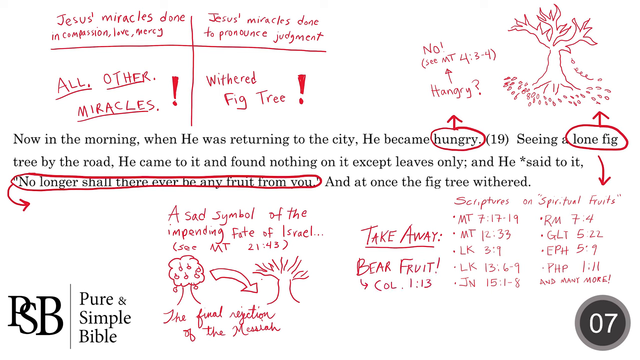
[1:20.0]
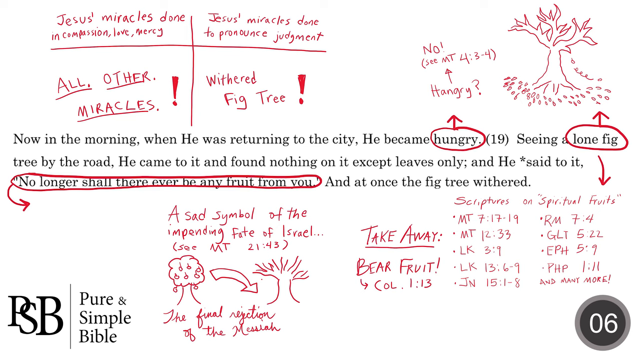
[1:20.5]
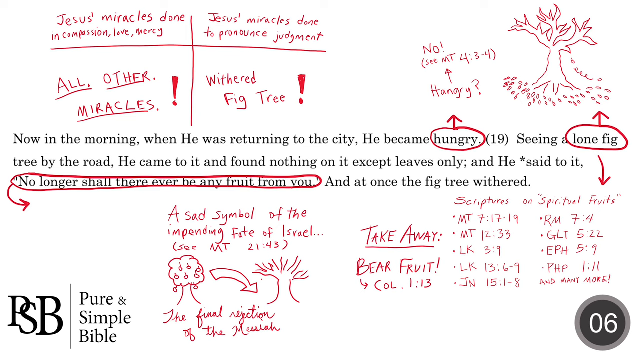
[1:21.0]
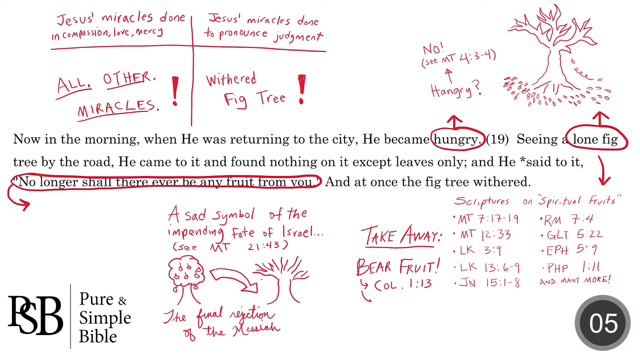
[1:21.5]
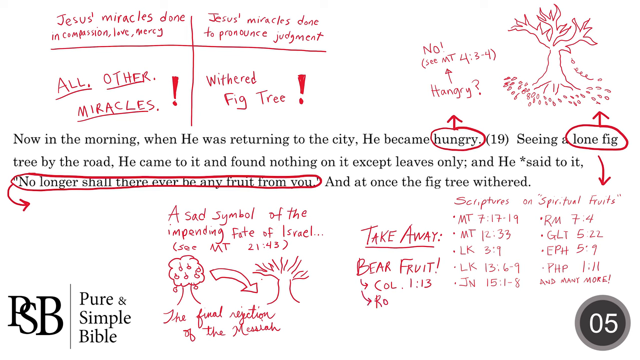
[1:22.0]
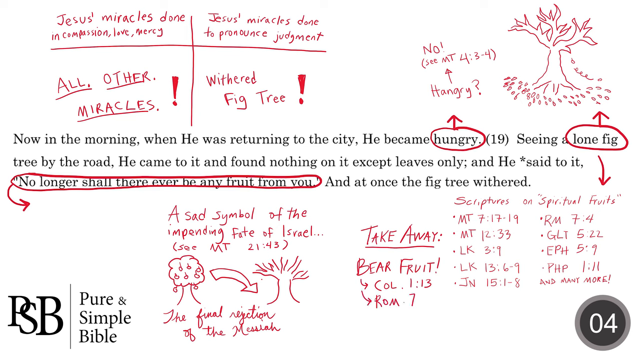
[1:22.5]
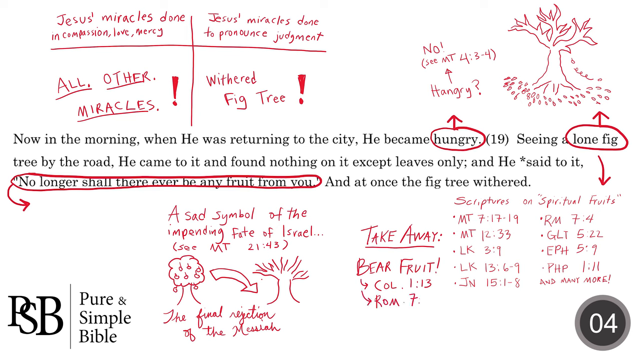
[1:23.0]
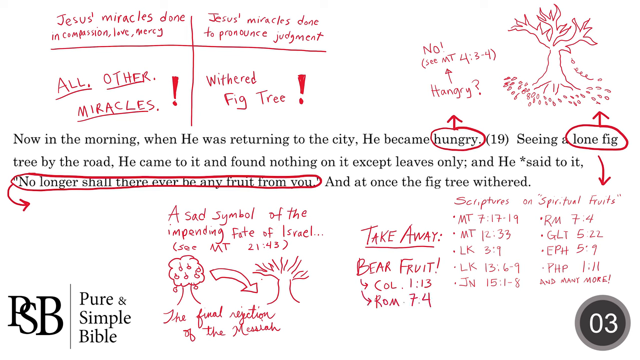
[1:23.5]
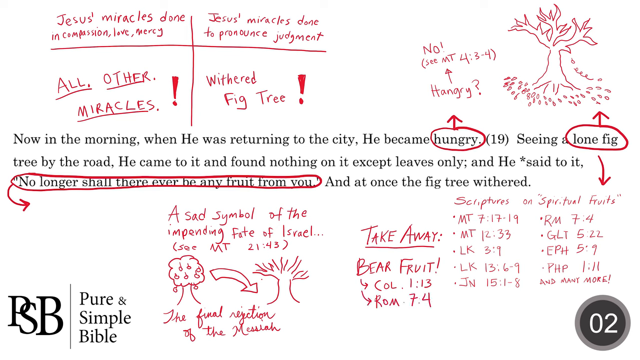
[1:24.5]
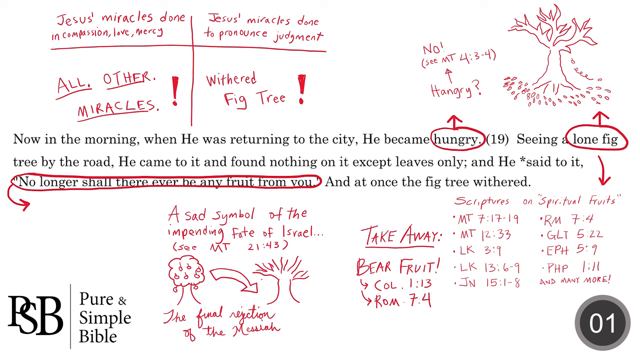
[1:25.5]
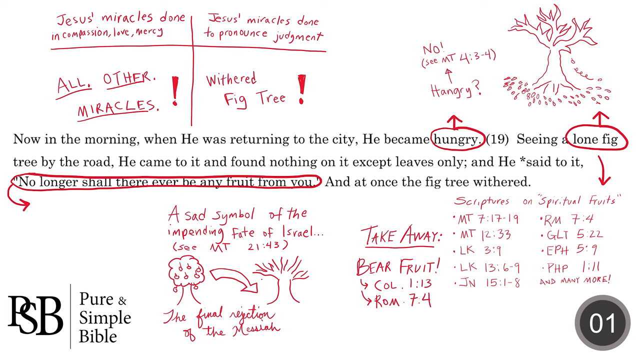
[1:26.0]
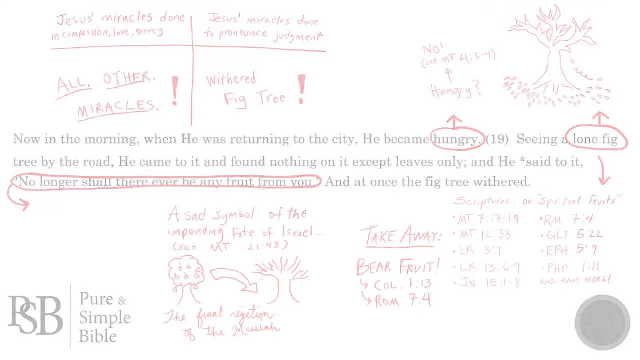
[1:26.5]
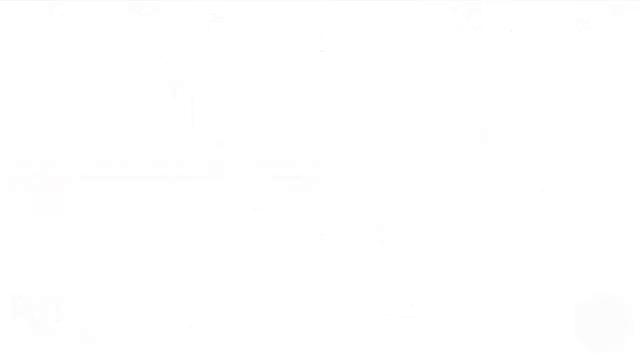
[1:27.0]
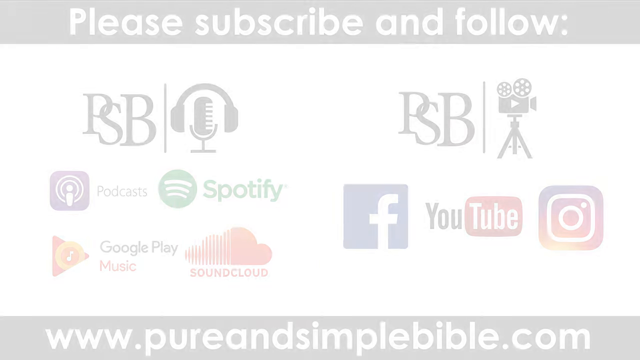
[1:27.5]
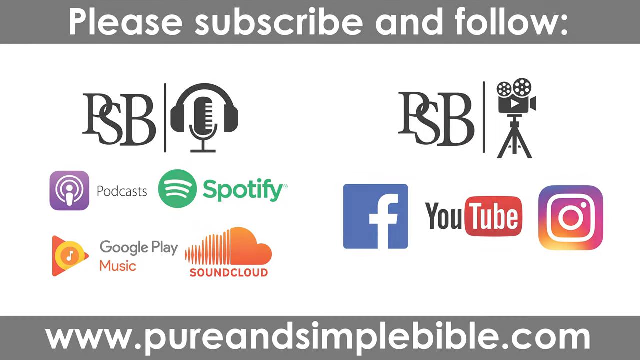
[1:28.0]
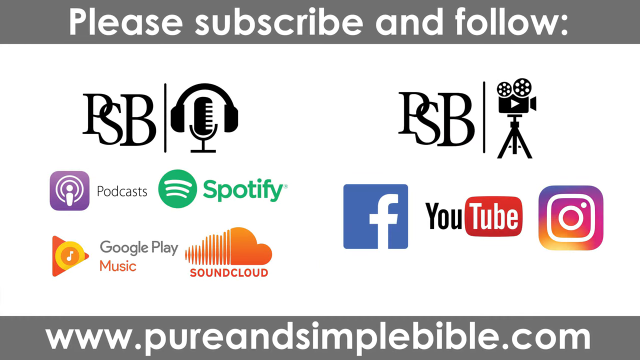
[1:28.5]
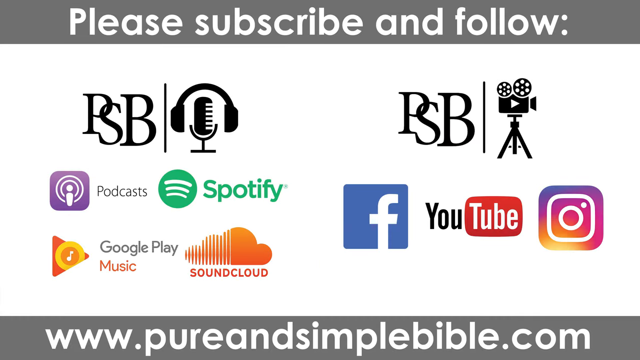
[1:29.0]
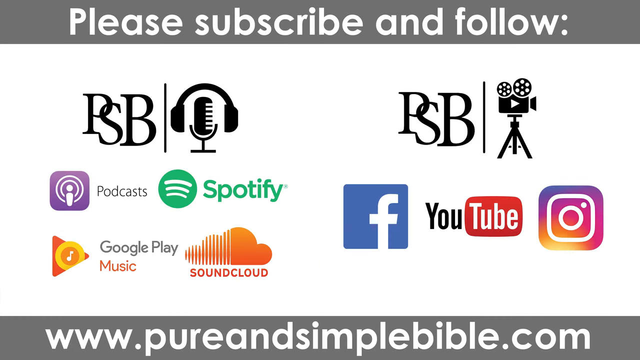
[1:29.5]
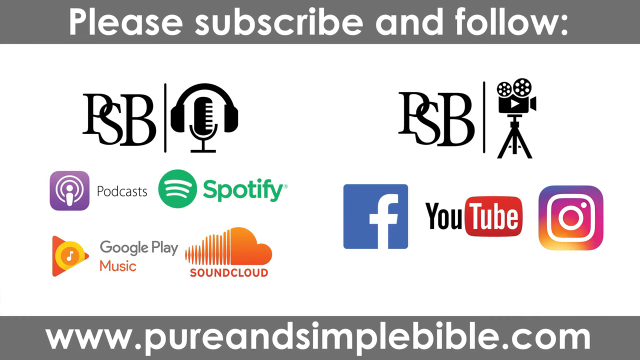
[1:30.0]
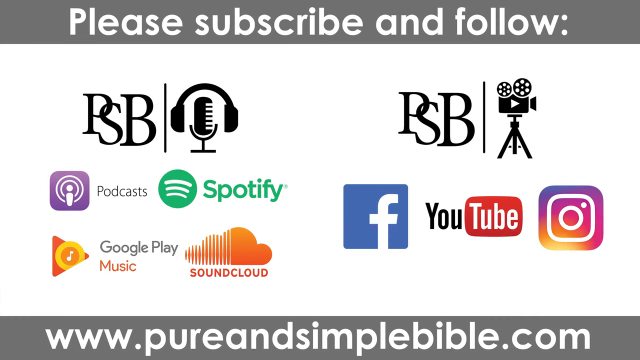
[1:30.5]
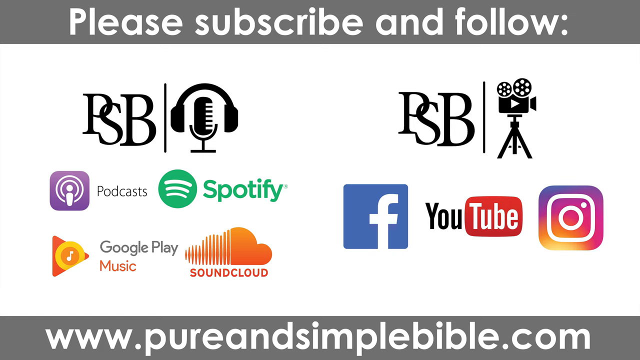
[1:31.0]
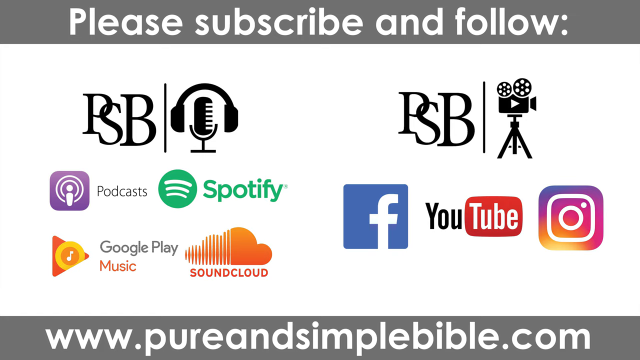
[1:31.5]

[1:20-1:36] Underneath, a note reads "take away bear fruit" with the reference scriptures Colossians 1.13 and Romans 7.4, while the timer in the bottom right corner keeps counting down. A transition animation of fading words then leads to another screen with the heading "please subscribe and follow" in big bold words. Below it are many social media platform logos, including Podcasts, Spotify, Google Play, Music, SoundCloud, Facebook, YouTube and Instagram. PSB also has some logos: one with a mic and headphones and another with a camera. Underneath is a website where they can also be followed. All of these platforms appear on a clear white background.